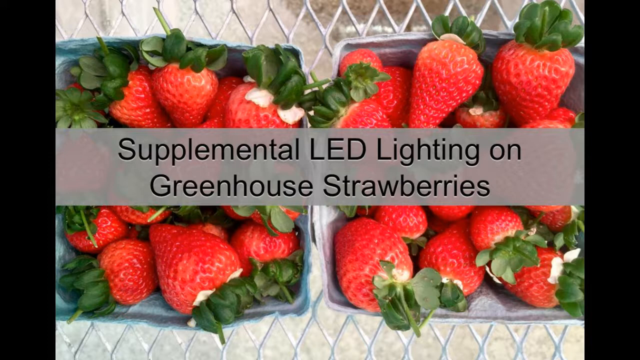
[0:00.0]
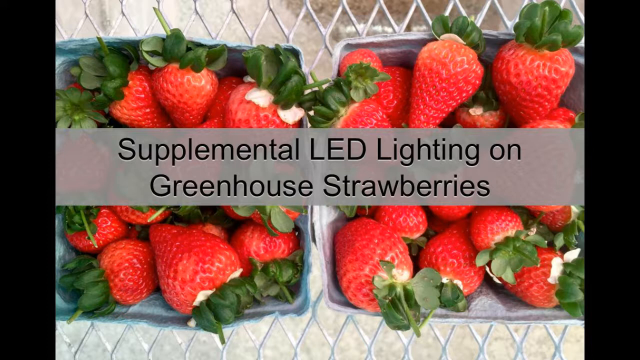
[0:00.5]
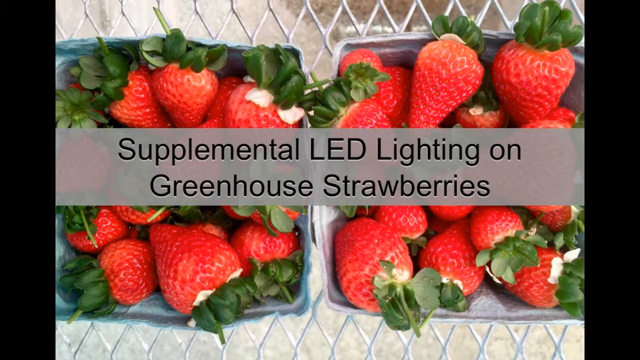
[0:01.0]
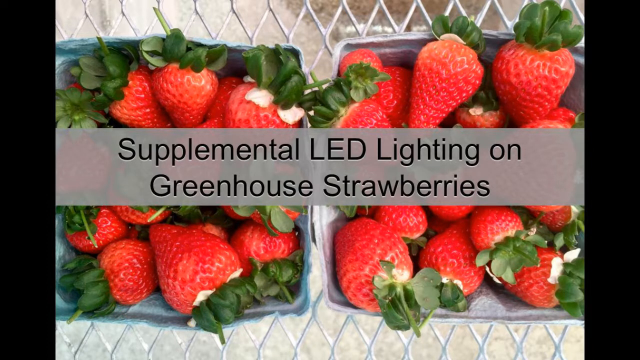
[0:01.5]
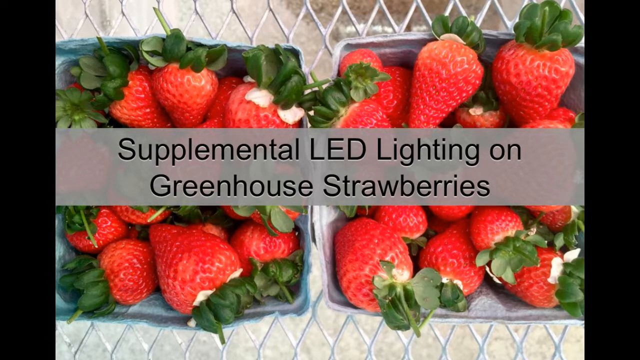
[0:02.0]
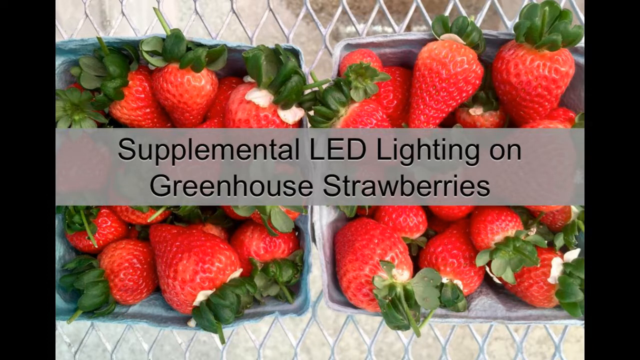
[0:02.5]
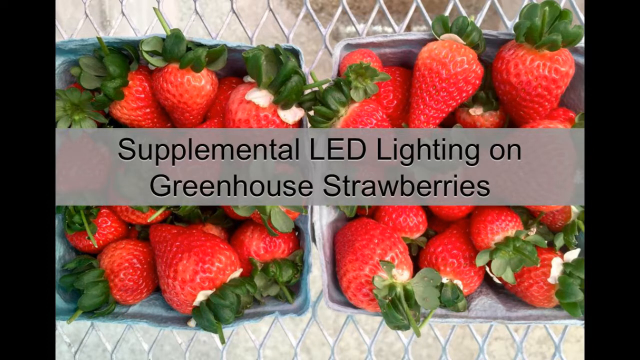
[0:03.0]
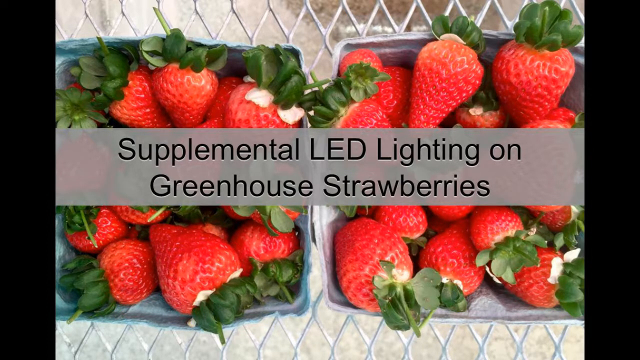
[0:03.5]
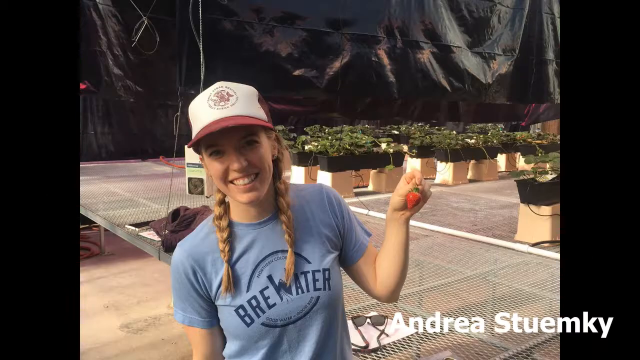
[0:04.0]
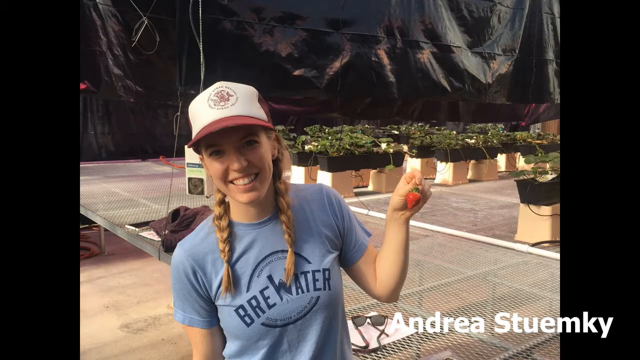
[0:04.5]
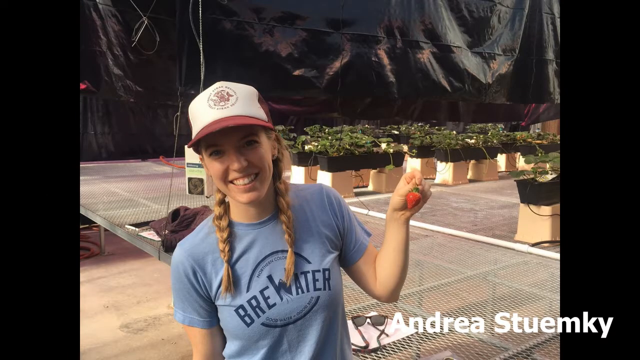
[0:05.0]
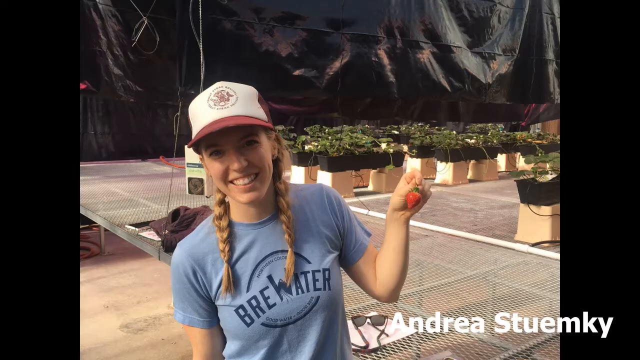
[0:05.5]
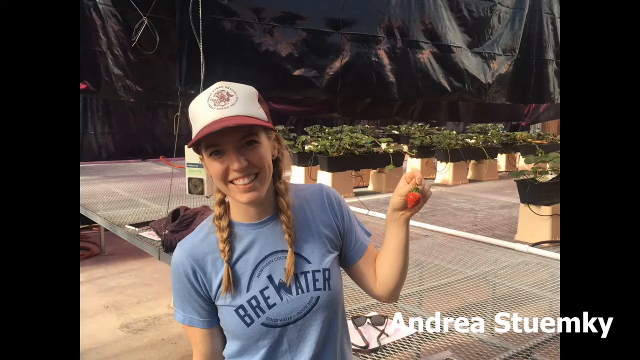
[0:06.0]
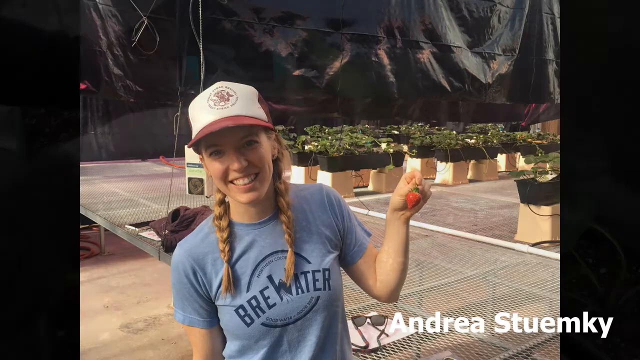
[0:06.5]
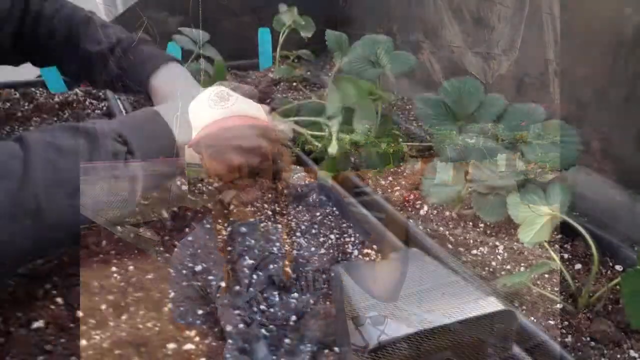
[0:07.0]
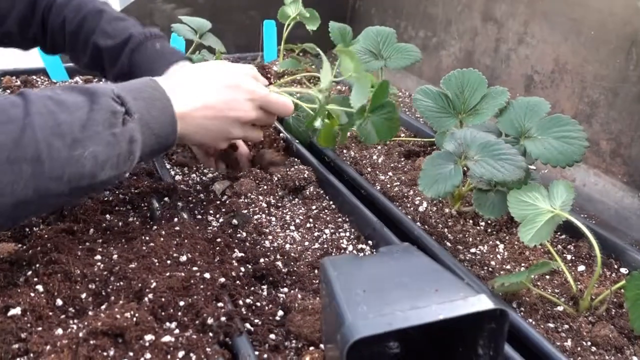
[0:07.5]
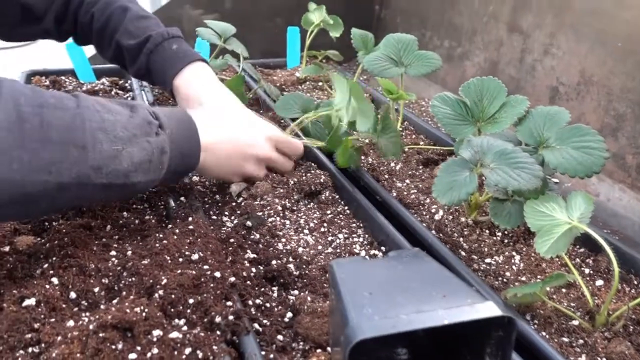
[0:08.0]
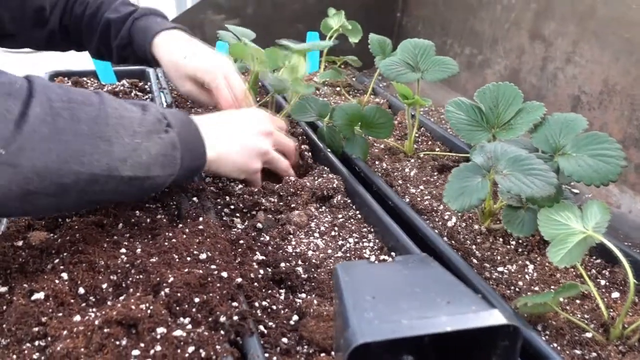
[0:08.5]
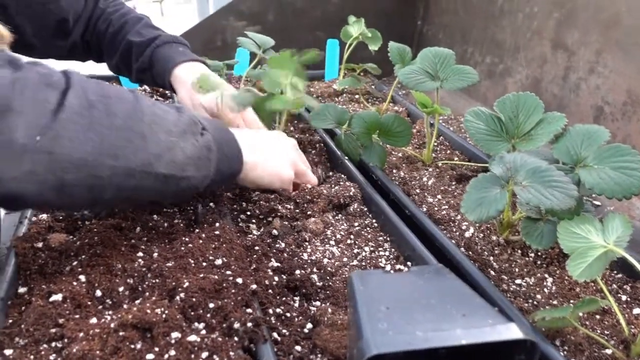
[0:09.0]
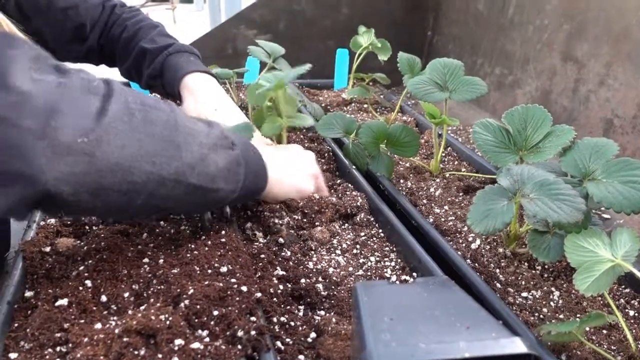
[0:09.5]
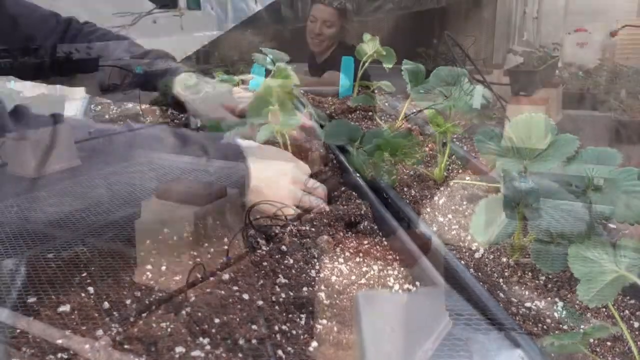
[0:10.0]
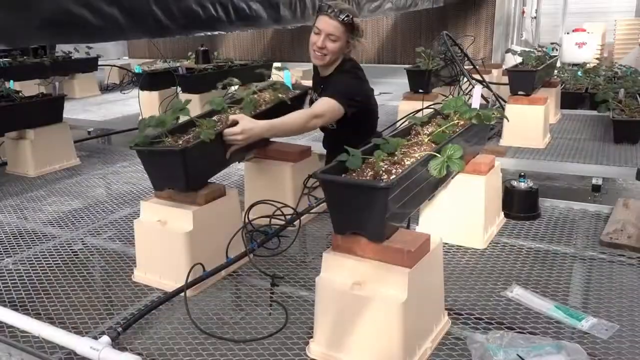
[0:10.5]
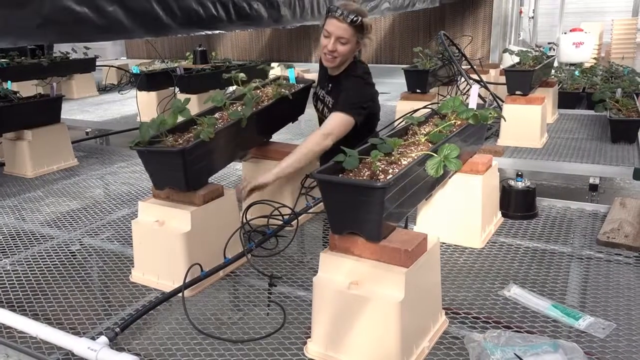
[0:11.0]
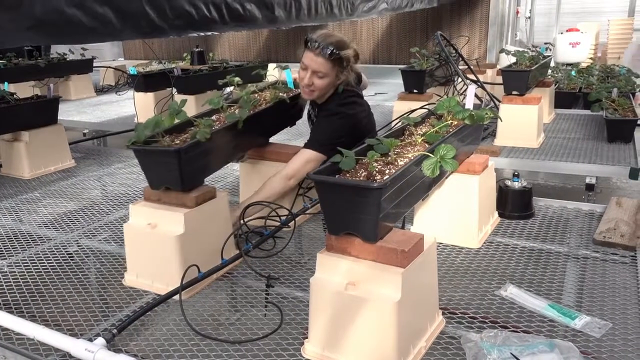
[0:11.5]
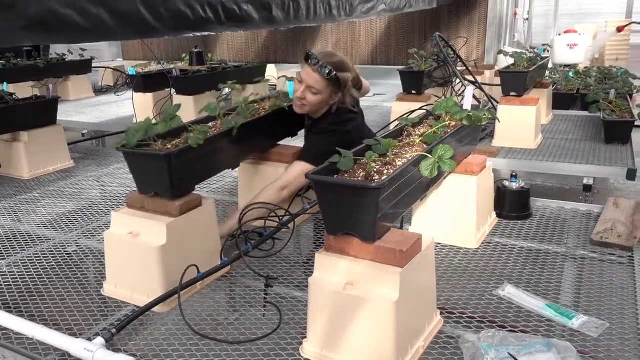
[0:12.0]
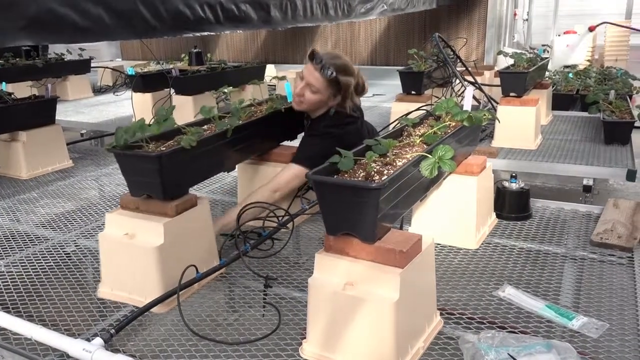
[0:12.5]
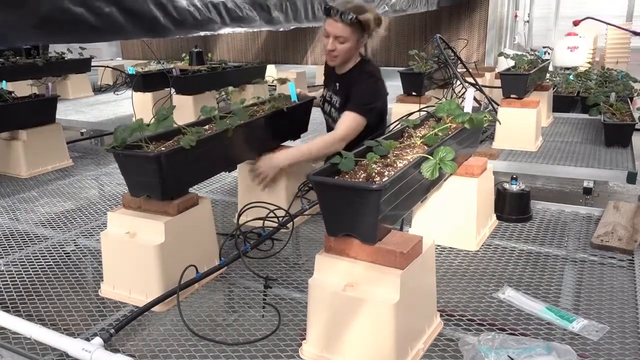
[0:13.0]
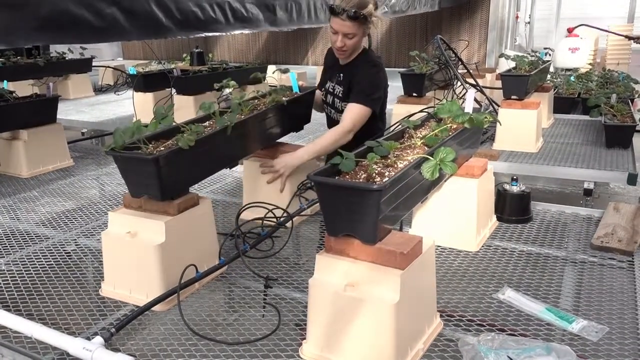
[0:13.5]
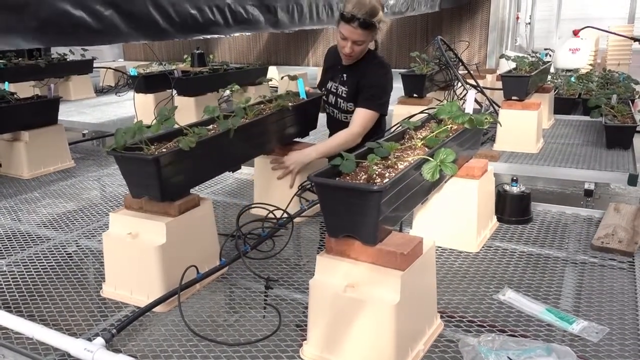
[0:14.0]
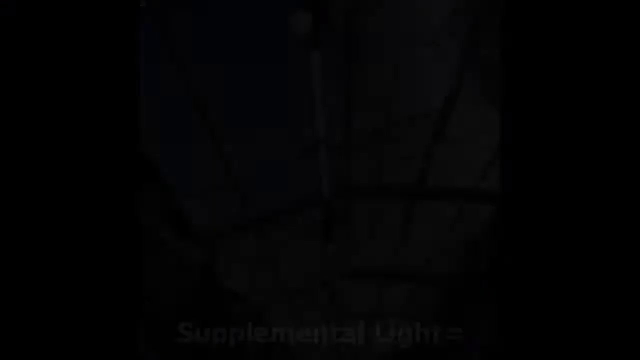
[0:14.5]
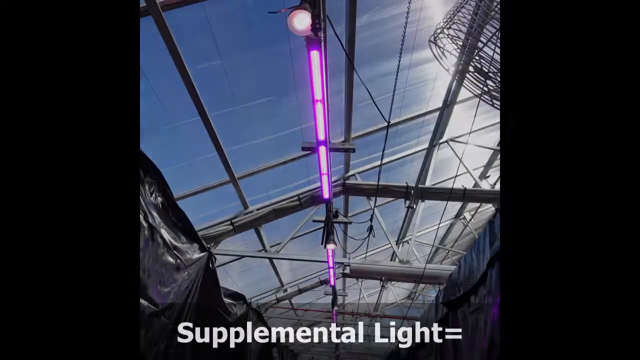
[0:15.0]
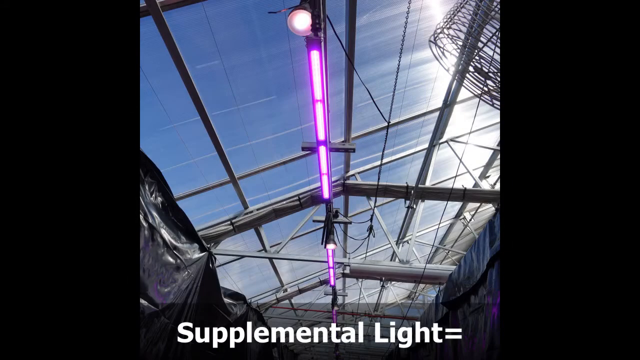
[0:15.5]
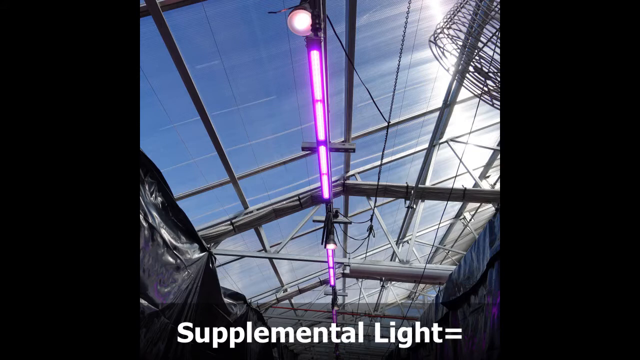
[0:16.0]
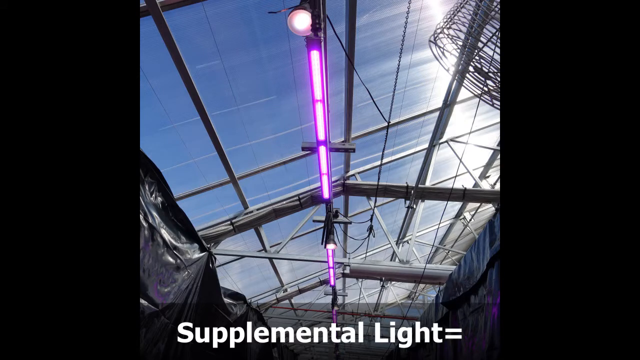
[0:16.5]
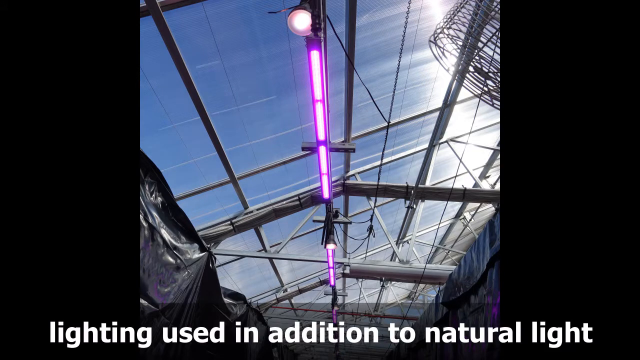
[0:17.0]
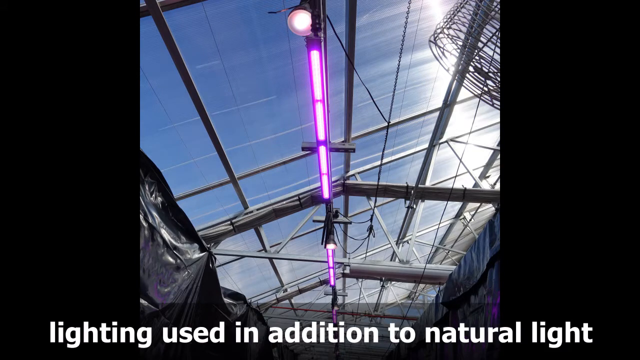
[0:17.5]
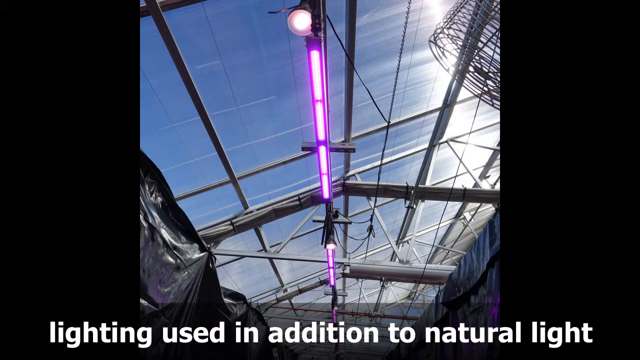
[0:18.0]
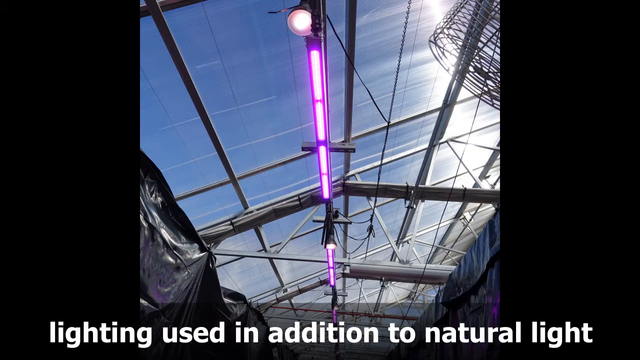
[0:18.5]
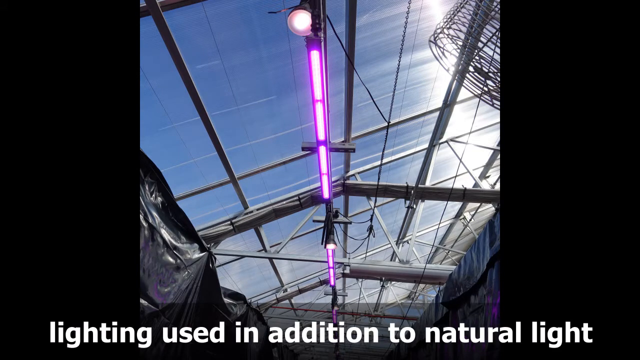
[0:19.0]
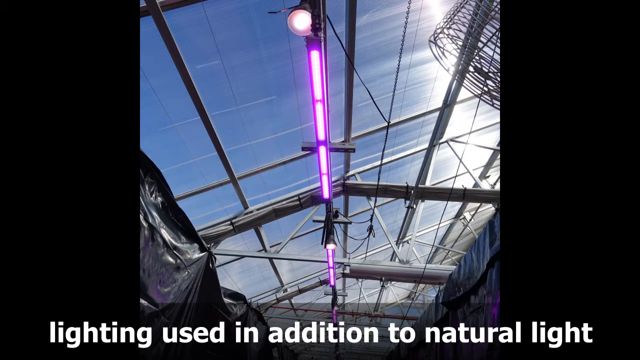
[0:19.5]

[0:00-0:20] Words in the center of the screen read "Supplemental LED lighting on greenhouse strawberries"; behind the text is an overhead image of two square carts of strawberries. The scene changes to a still image of a woman facing the camera and smiling. She wears a red and white hat and a light blue t-shirt, has her hair in two braided pigtails, and holds a single strawberry in her left hand. In the background to the right are many planter boxes of plants. Next, someone plants plants into planter boxes: of three planter boxes, the person sticks a plant into the middle one, while the box on the right holds a bunch of green plants. The scene changes to a woman in the middle placing a planter box on two white box-like structures with bricks on top of them so that the planter boxes are held up higher. The image then changes to a view looking upward at the ceiling of what looks like a greenhouse, where a vertical purple LED light is connected to the ceiling in the center. A caption at the bottom reads "Supplemental light equals lighting used in addition to natural light."